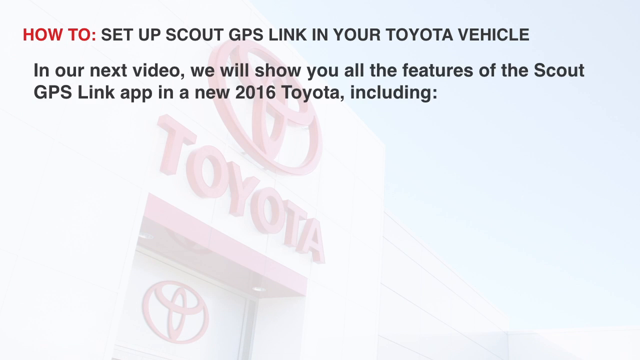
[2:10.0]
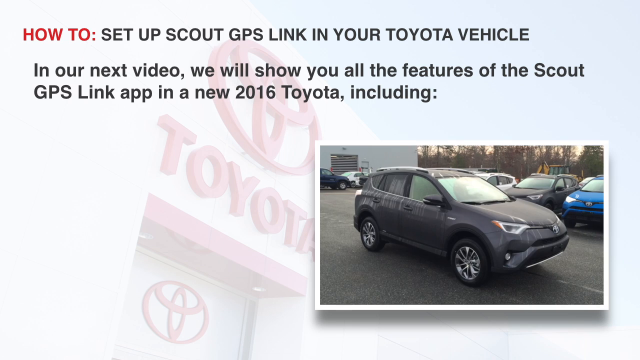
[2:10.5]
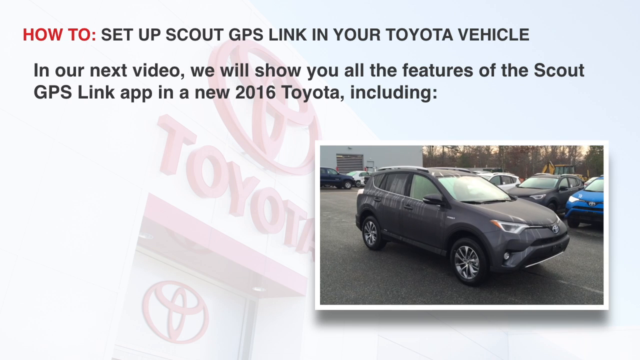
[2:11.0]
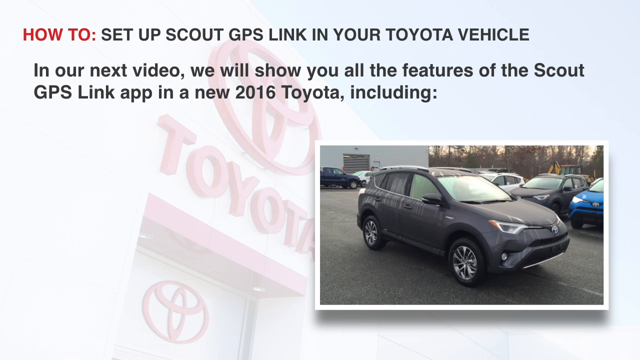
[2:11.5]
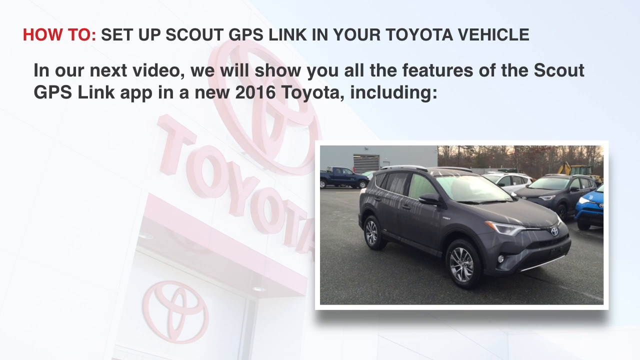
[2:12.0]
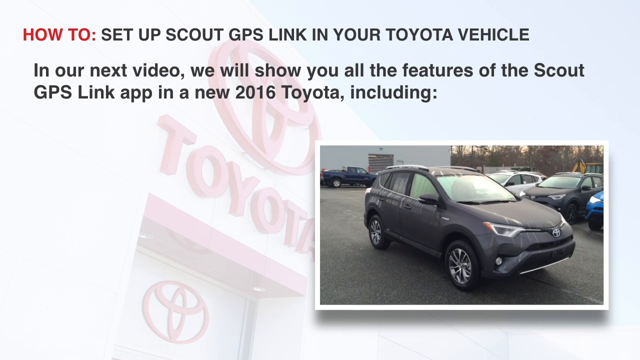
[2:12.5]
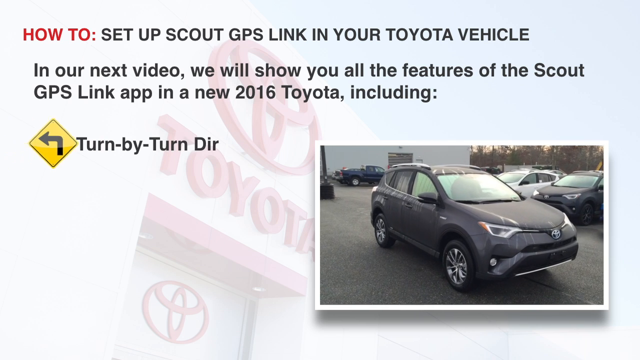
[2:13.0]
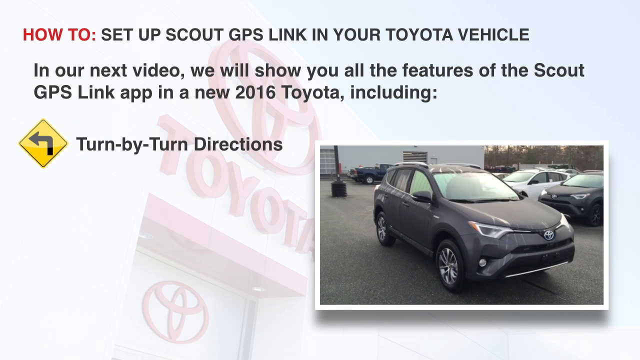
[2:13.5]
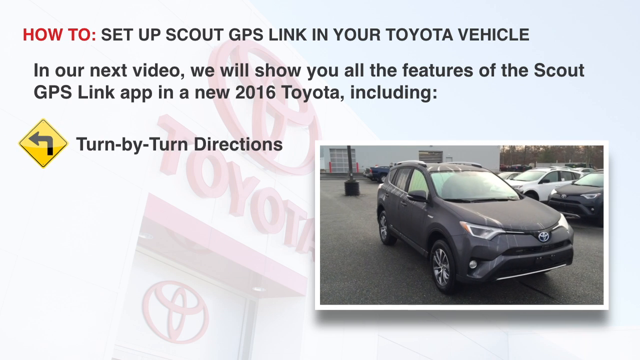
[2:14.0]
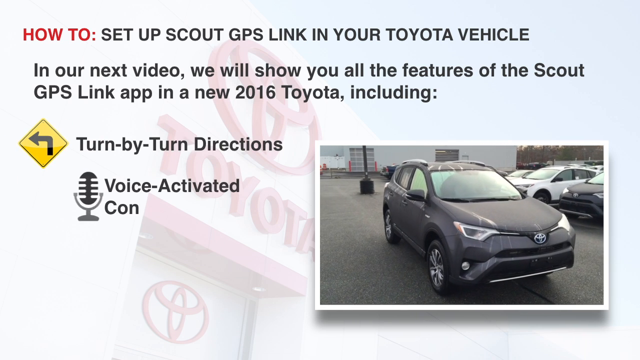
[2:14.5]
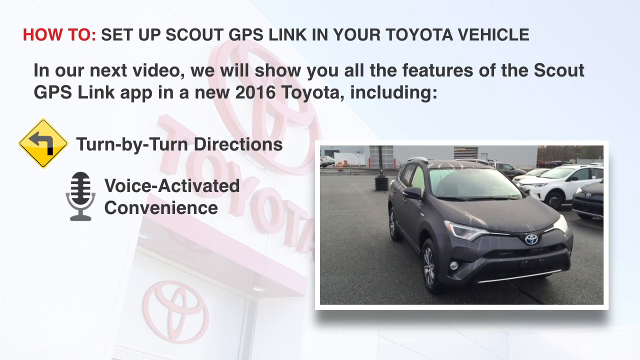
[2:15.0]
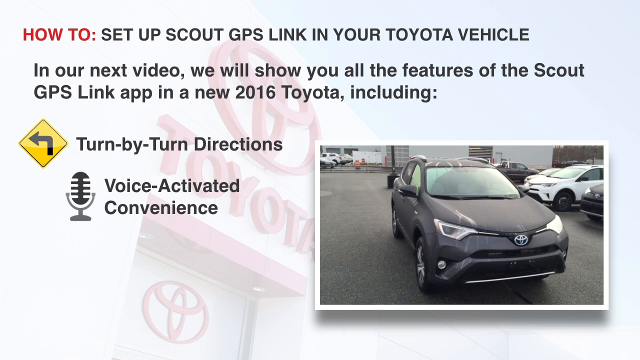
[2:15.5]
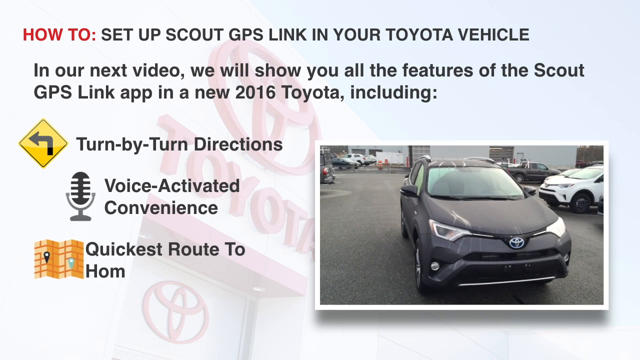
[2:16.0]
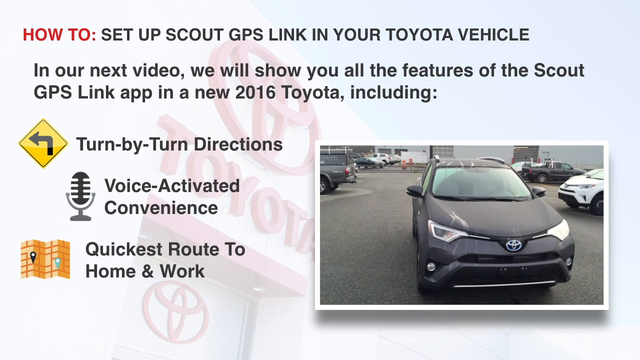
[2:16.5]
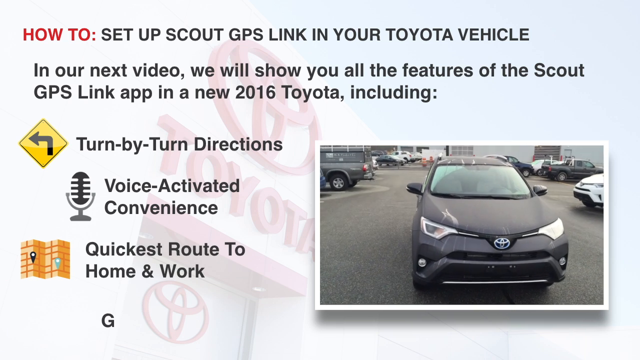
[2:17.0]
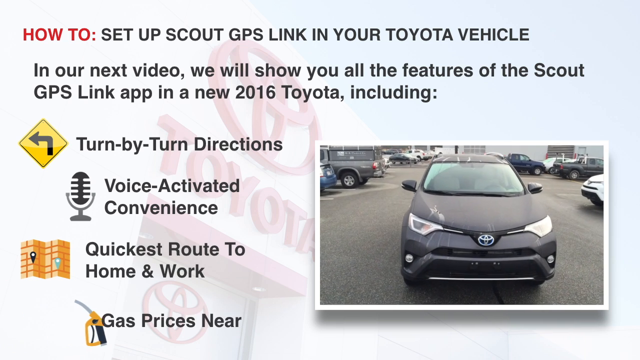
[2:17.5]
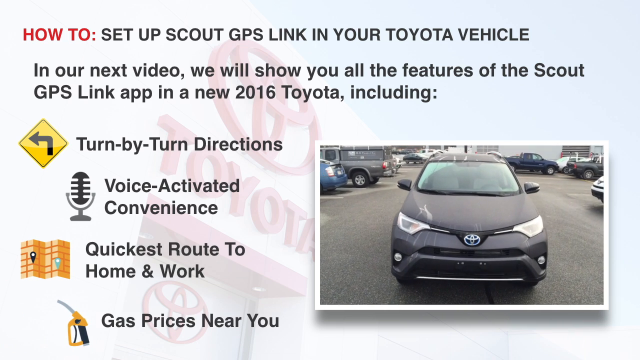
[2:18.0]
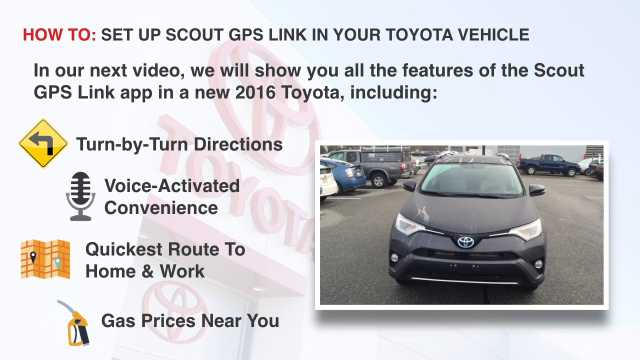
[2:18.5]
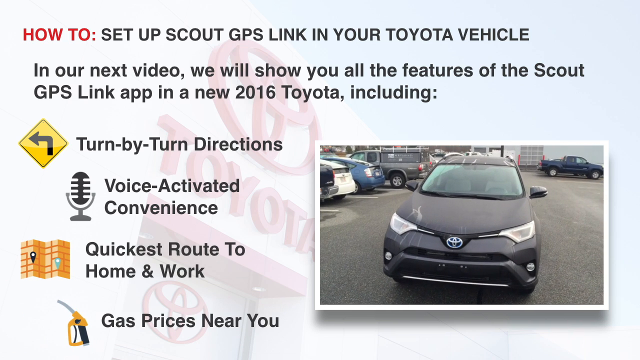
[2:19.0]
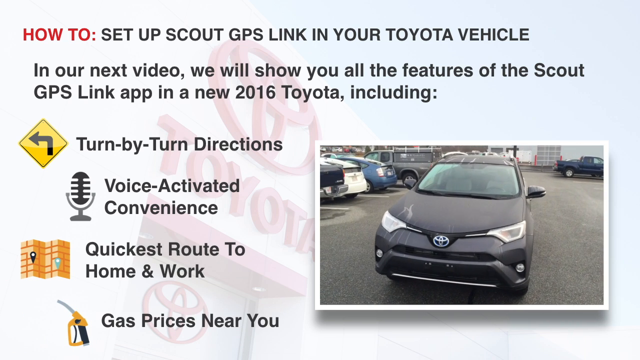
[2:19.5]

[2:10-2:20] The screen saying it will show more features of the GPS Link app in a new 2016 Toyota "including" continues, now with a live video view of a car, kind of grayish in color, with the camera filming around it in a clockwise direction. On the left side is a list reading "turn-by-turn directions," "voice activated convenience," "quickest route to home and work," and "gas prices near you," each with a little symbol next to it; the gas prices item has a gas handle.